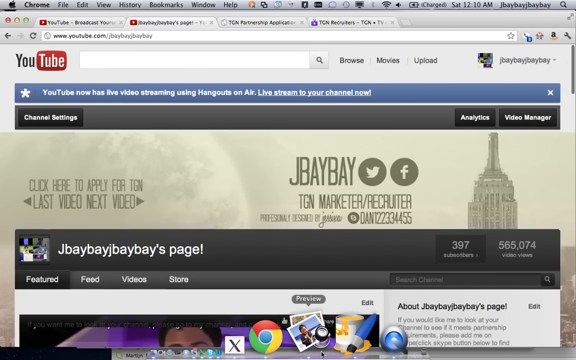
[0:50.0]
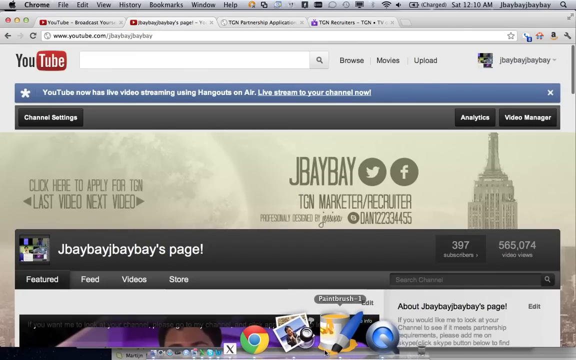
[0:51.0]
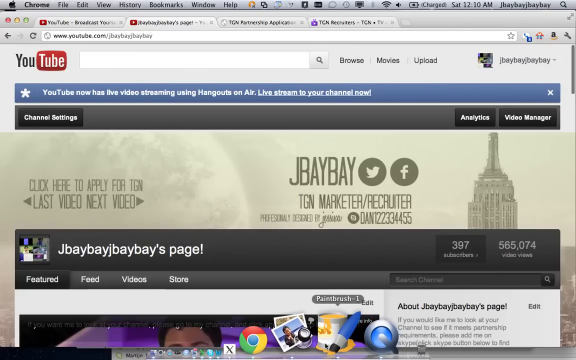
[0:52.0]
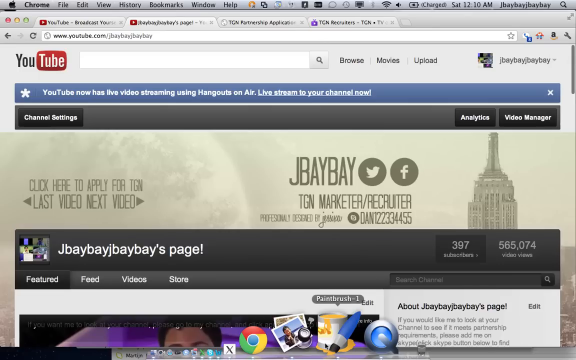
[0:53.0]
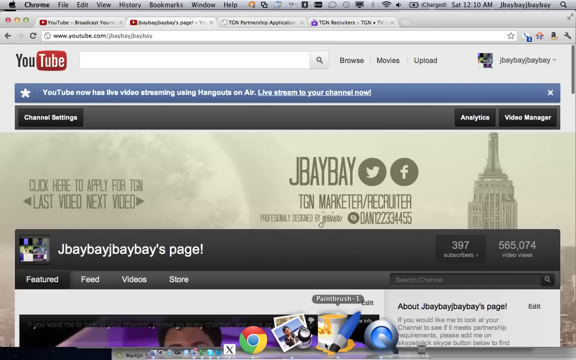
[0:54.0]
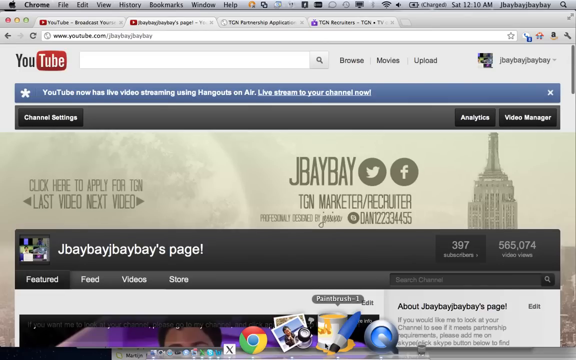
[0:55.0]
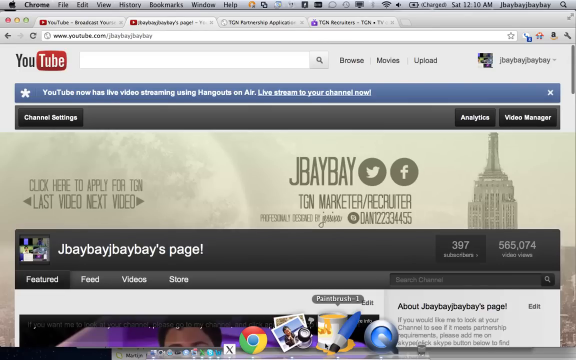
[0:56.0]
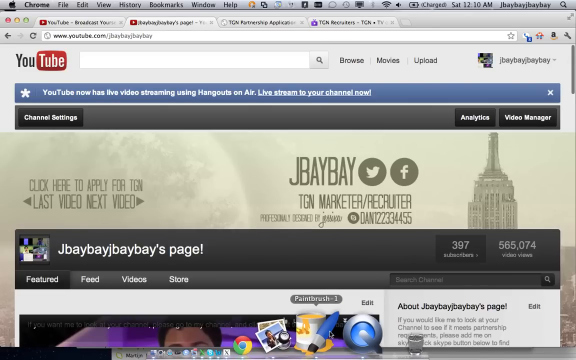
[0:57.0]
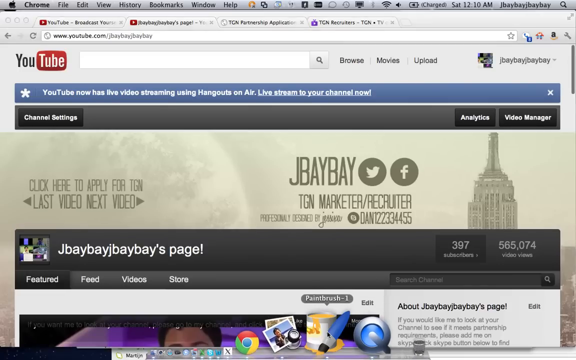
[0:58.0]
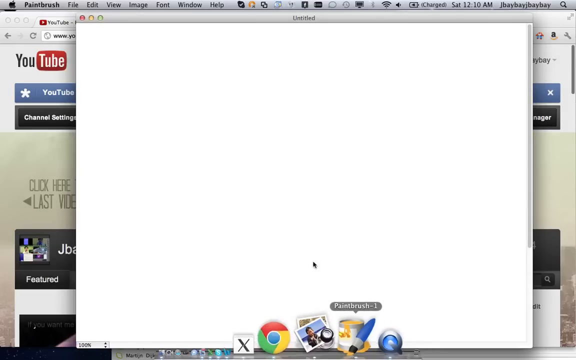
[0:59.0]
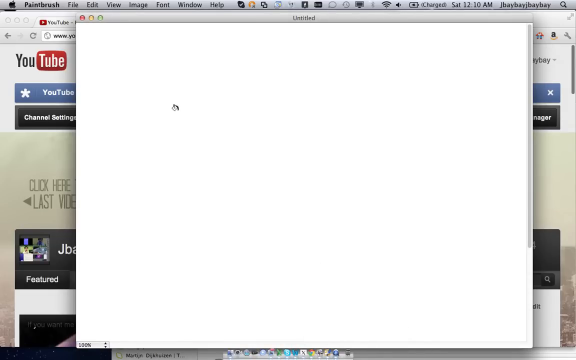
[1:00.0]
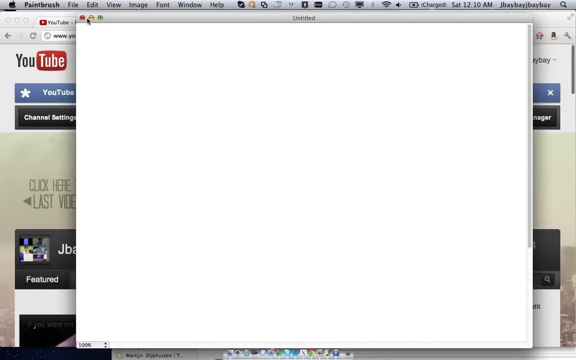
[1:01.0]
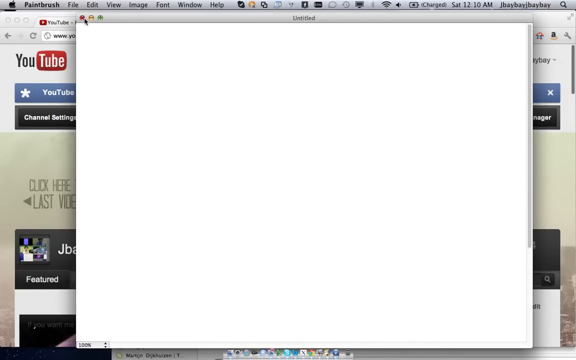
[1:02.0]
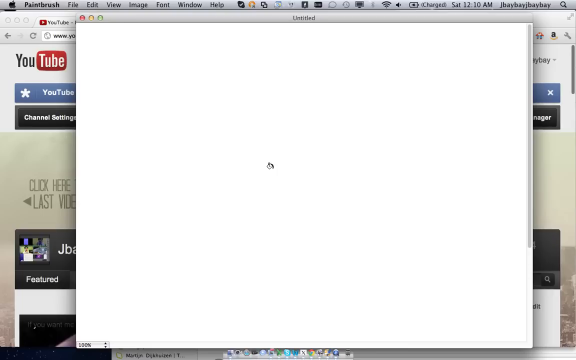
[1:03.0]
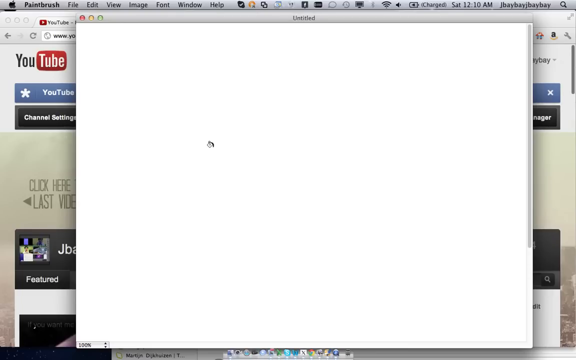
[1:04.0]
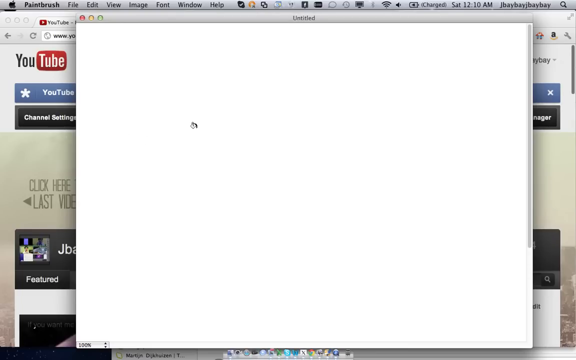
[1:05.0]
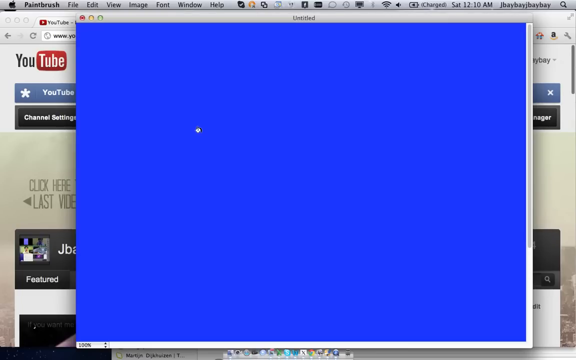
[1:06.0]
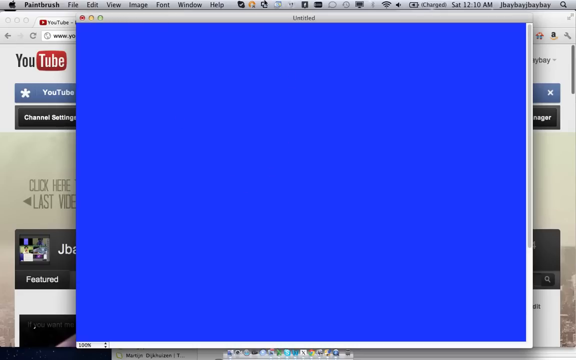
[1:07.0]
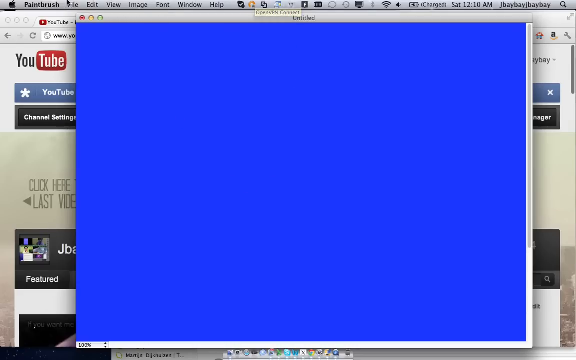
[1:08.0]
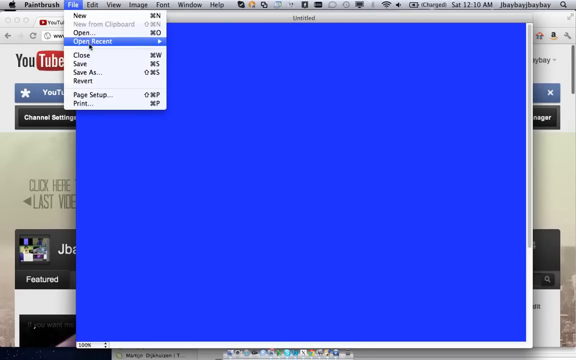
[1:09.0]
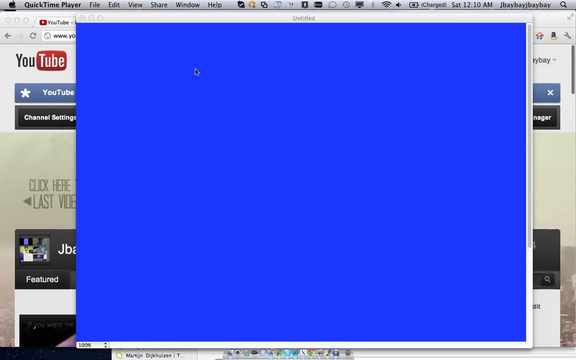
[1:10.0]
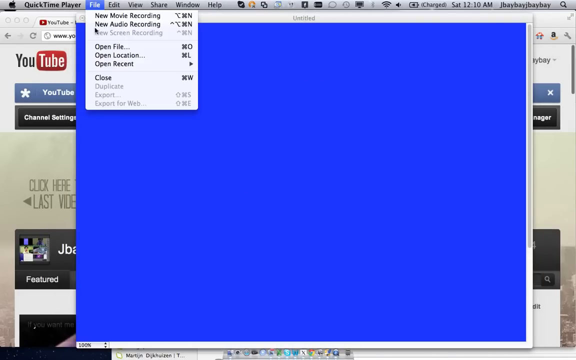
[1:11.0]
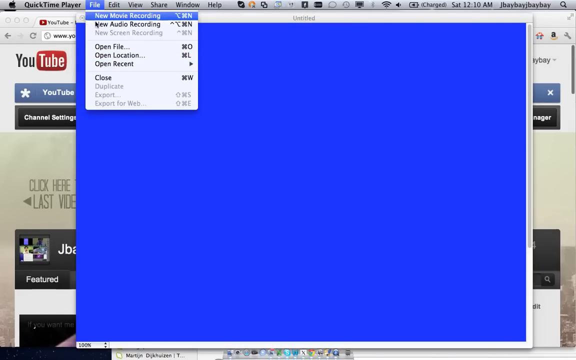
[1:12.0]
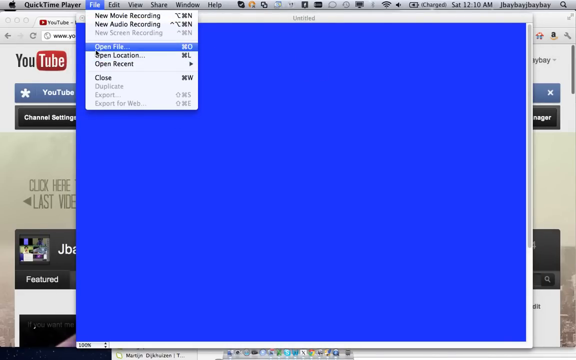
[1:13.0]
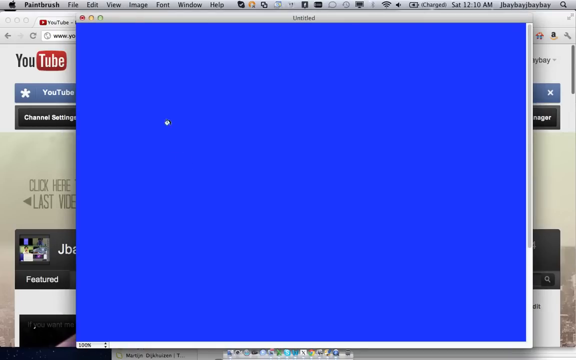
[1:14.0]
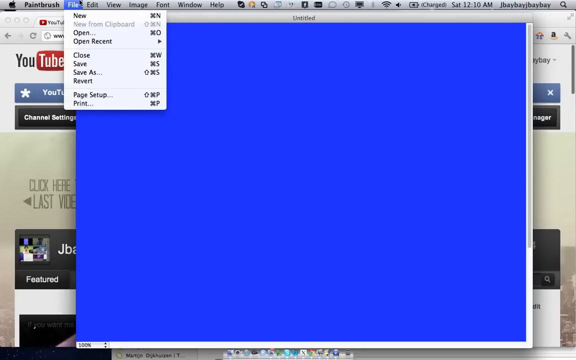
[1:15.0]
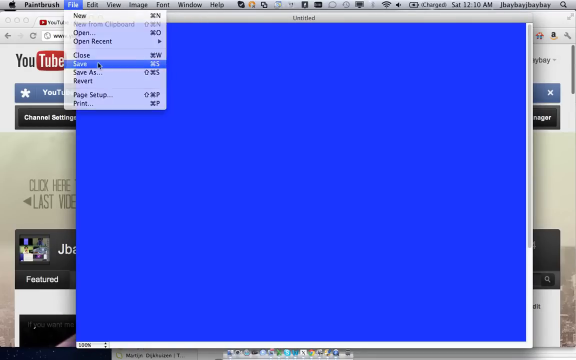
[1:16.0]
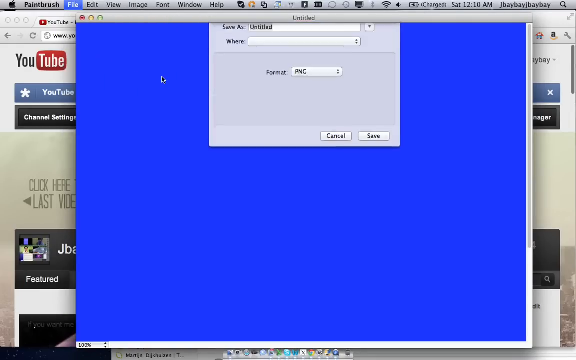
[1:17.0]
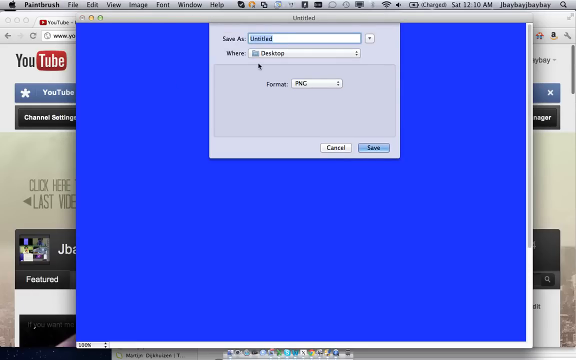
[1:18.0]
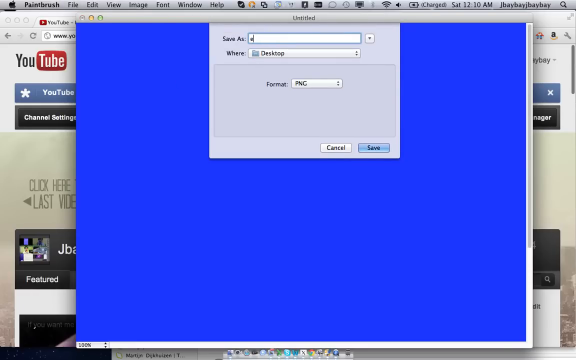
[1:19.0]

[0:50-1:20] The Jbebe page is shown and a carousel is up. Paintbrush is opened with an untitled page, and its menu shows New, Open Recent, Open File and Save; the untitled page is saved. The channel page includes the text "if you would like me to look at your channel to see if it meets partnership requirements, please add me on Skype" and shows 397 subscribers and 565,000 video views. There is a photo of the Empire State Building, with sort of a pencil drawing in the background, plus a feed of videos and a store page. The untitled page pops up, and in Paintbrush Open Recent, Open File and Save are chosen, showing a process for saving a document.